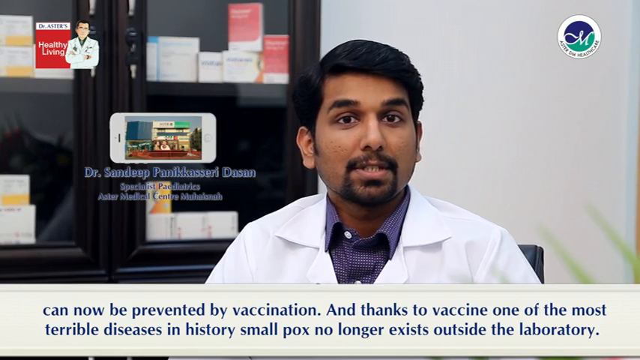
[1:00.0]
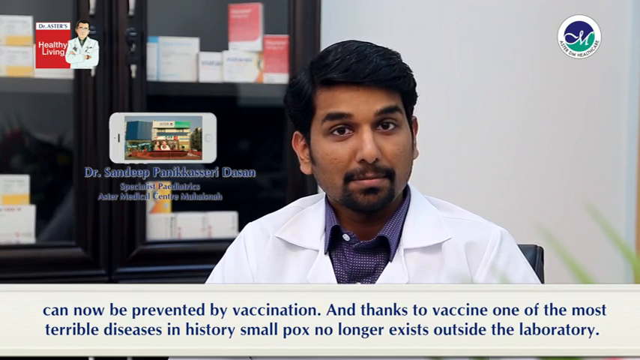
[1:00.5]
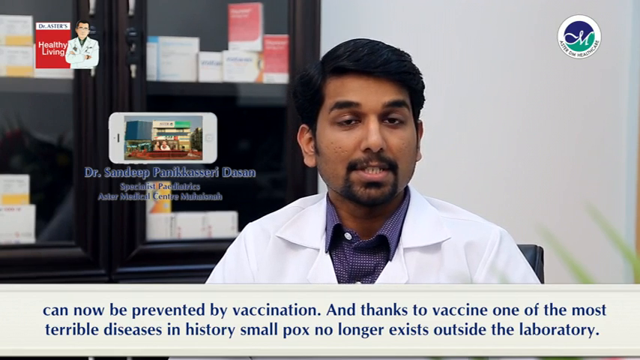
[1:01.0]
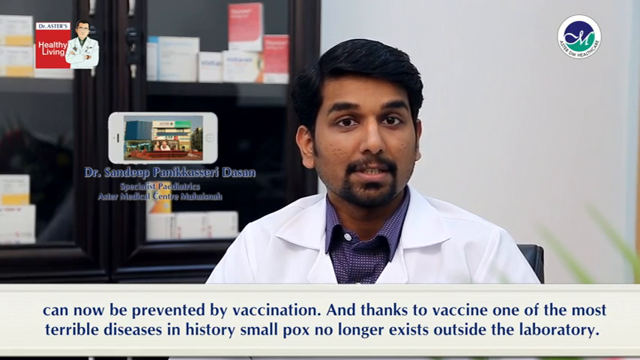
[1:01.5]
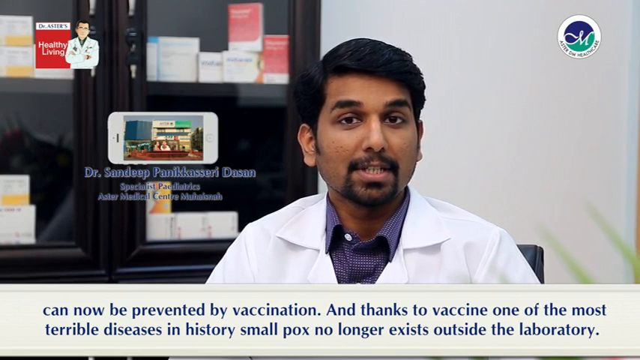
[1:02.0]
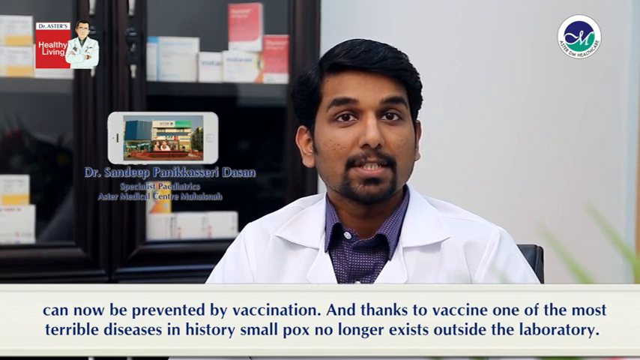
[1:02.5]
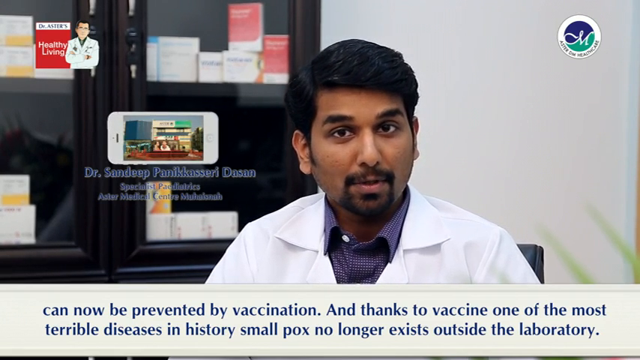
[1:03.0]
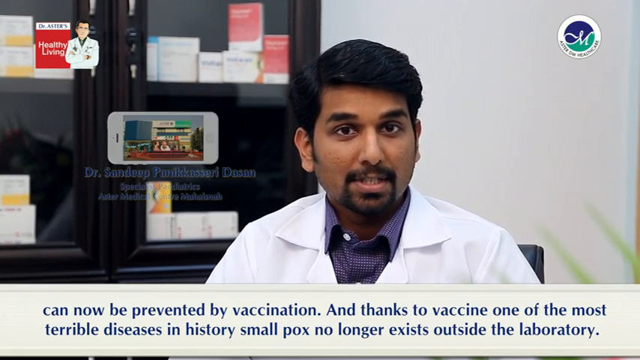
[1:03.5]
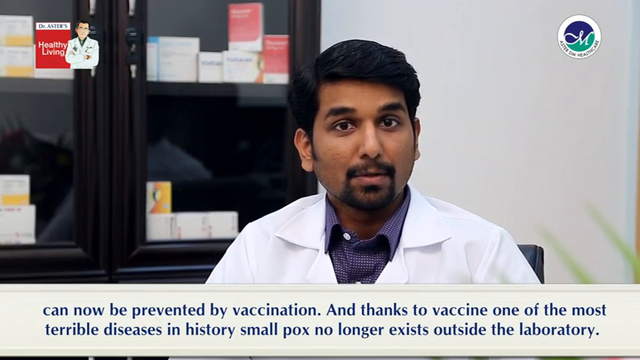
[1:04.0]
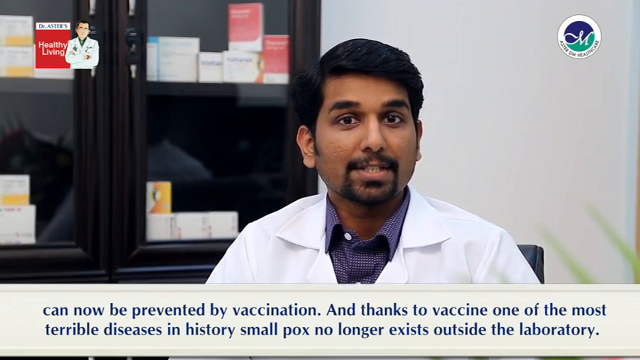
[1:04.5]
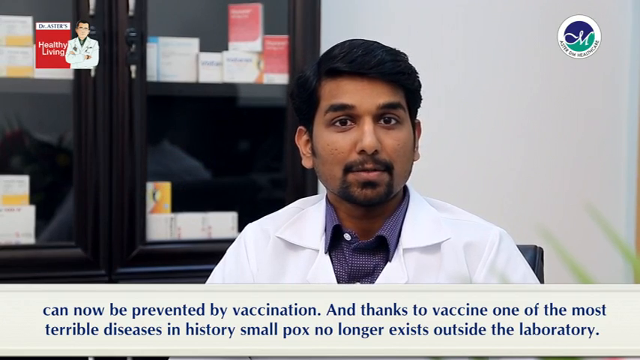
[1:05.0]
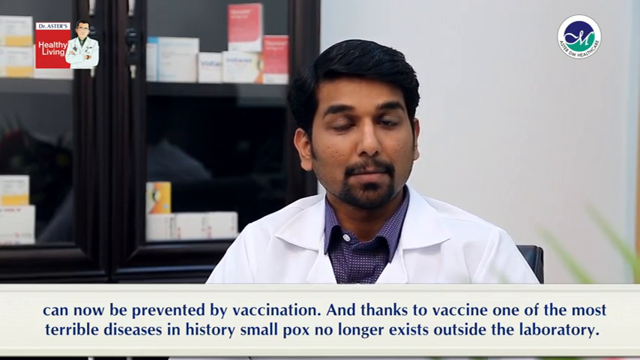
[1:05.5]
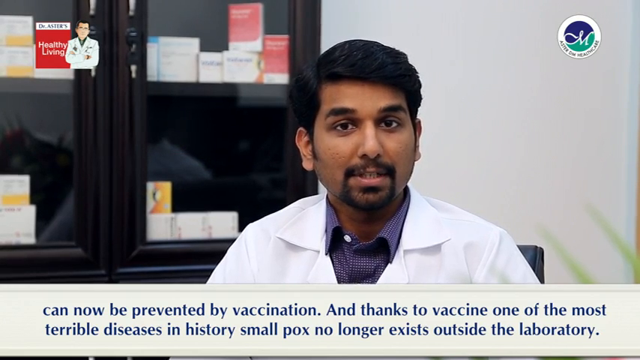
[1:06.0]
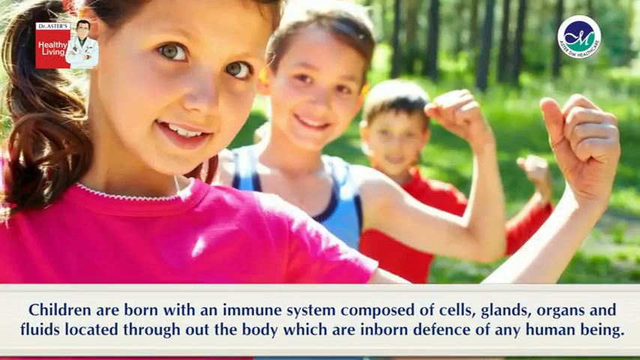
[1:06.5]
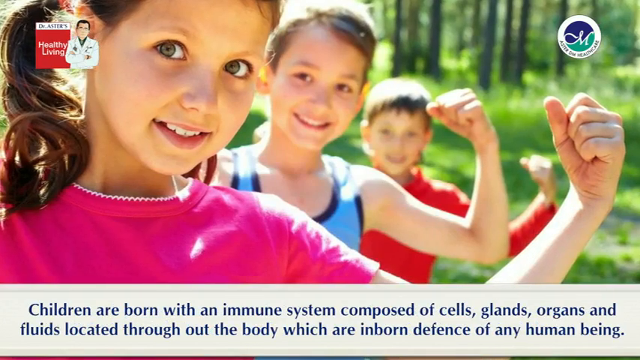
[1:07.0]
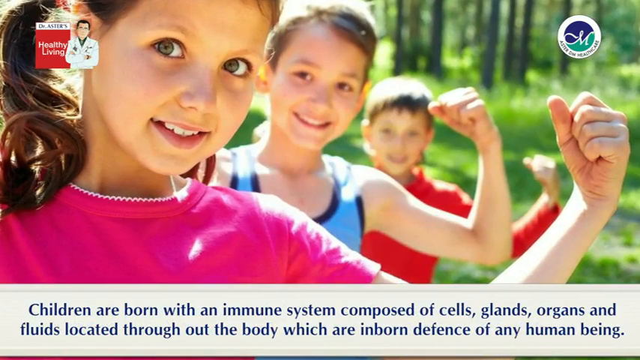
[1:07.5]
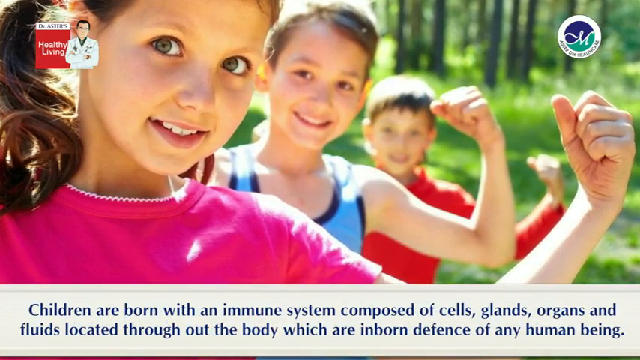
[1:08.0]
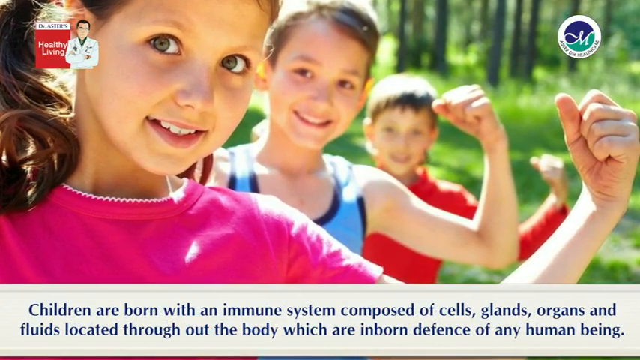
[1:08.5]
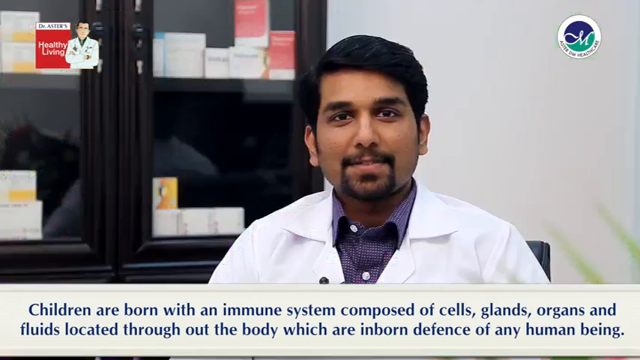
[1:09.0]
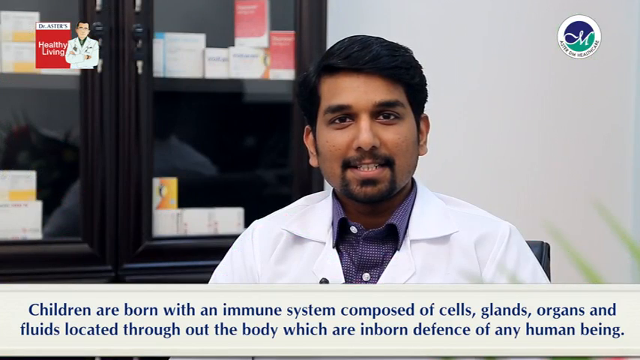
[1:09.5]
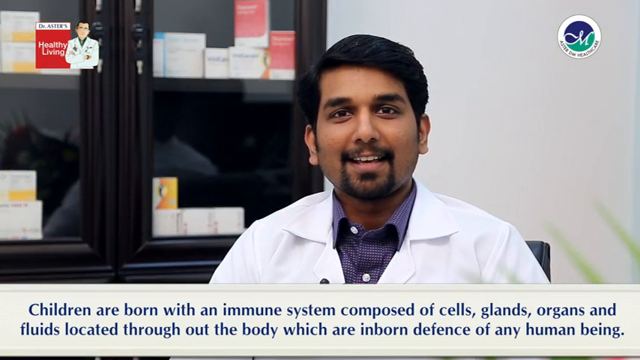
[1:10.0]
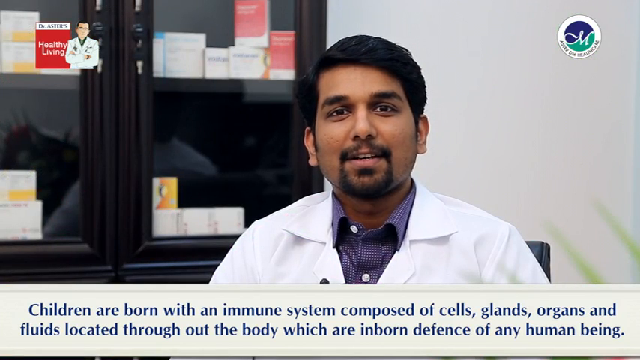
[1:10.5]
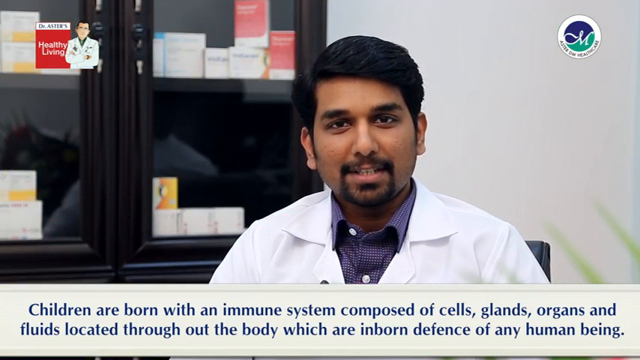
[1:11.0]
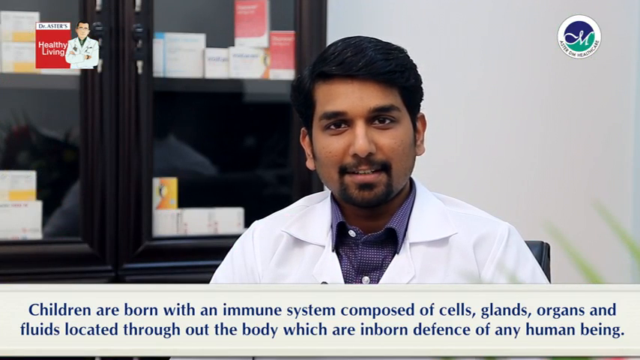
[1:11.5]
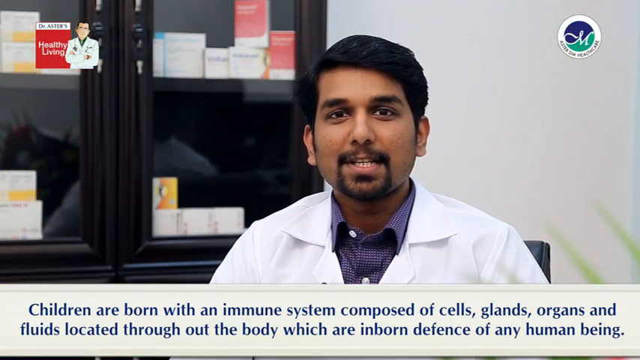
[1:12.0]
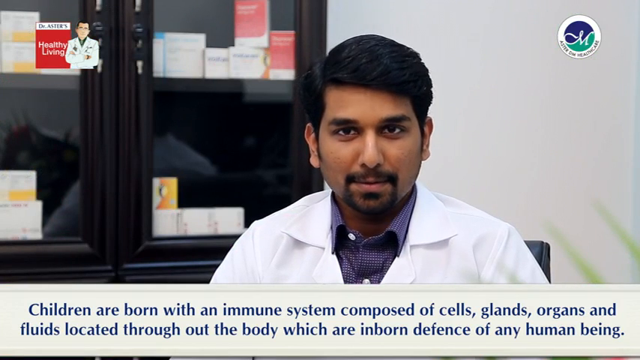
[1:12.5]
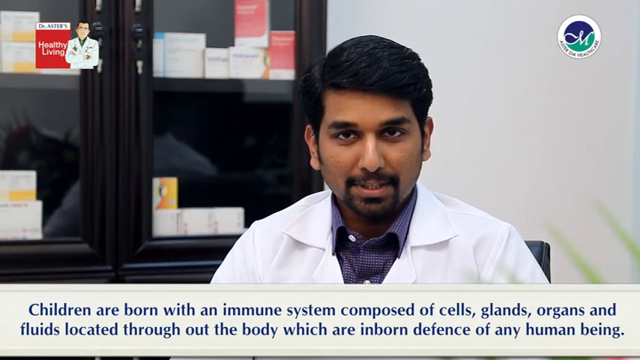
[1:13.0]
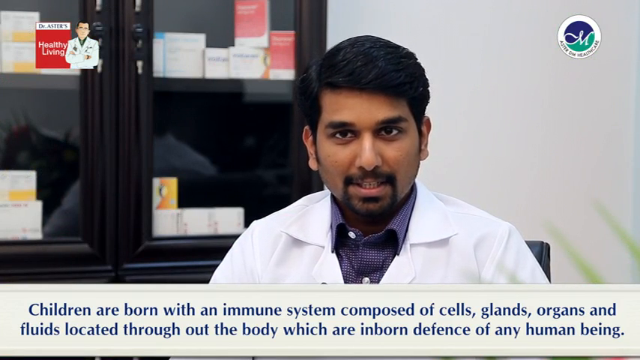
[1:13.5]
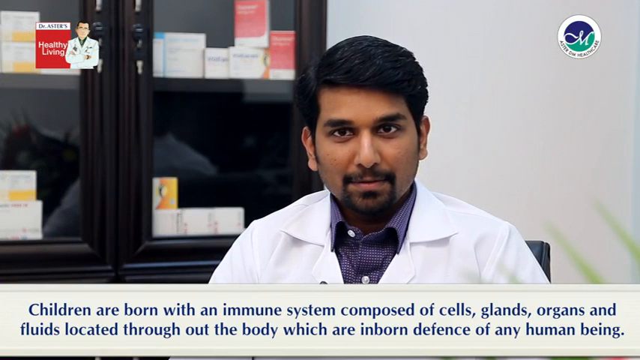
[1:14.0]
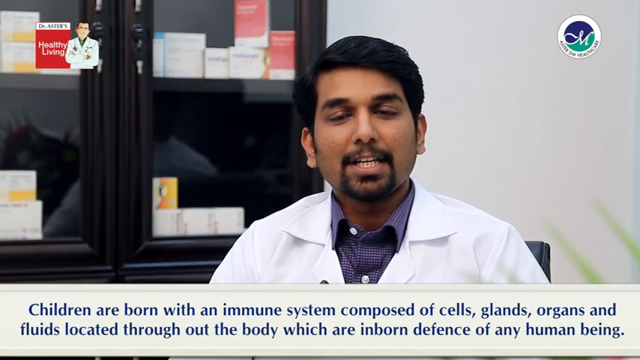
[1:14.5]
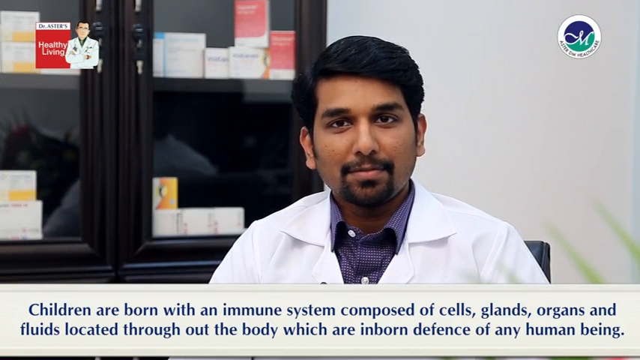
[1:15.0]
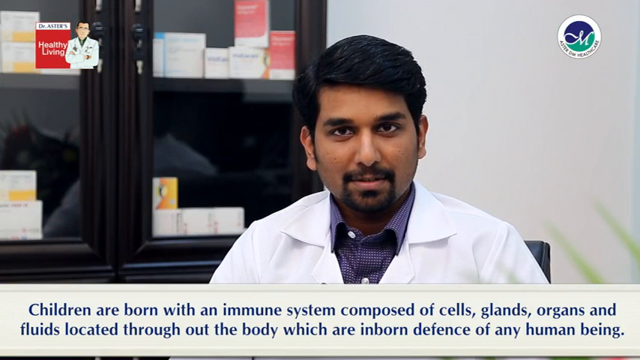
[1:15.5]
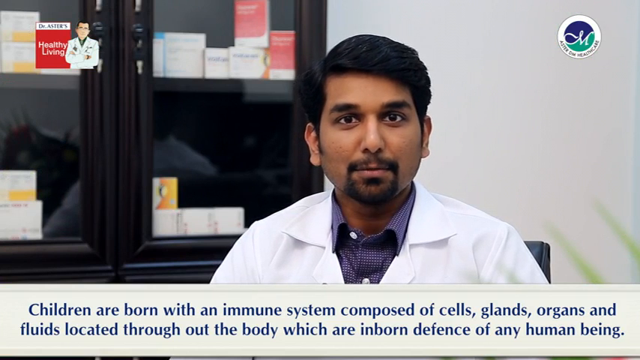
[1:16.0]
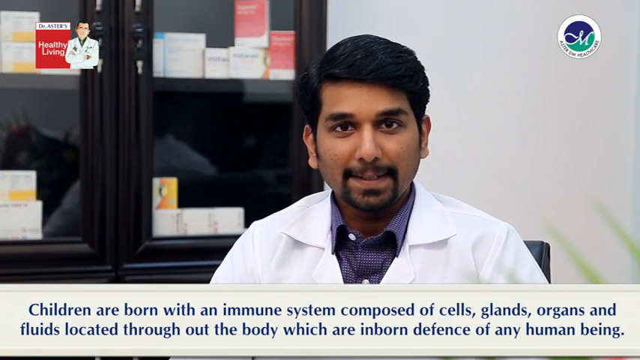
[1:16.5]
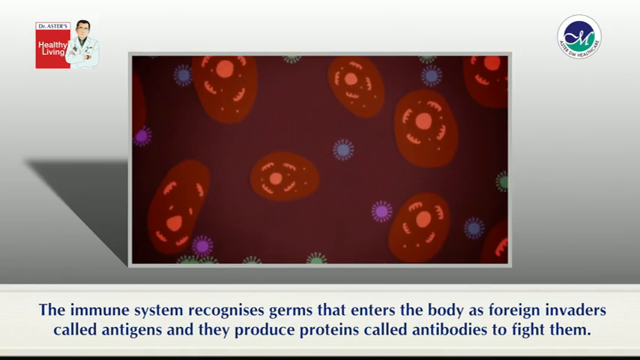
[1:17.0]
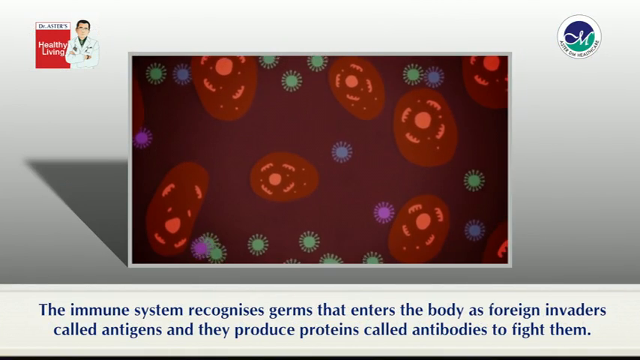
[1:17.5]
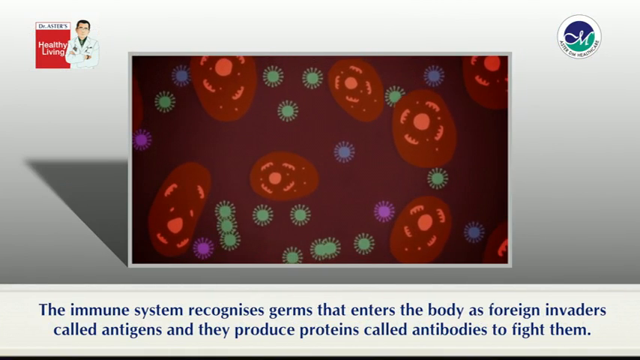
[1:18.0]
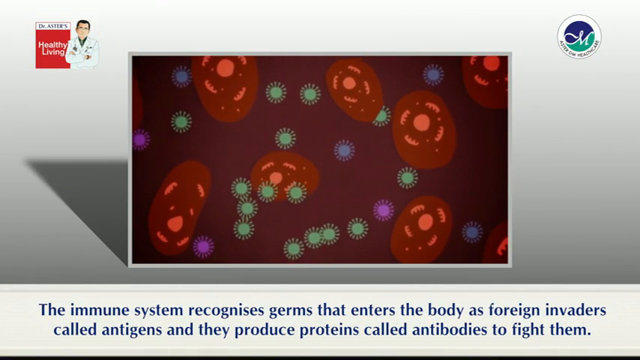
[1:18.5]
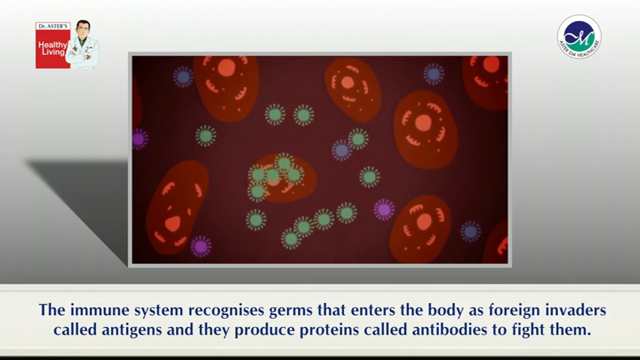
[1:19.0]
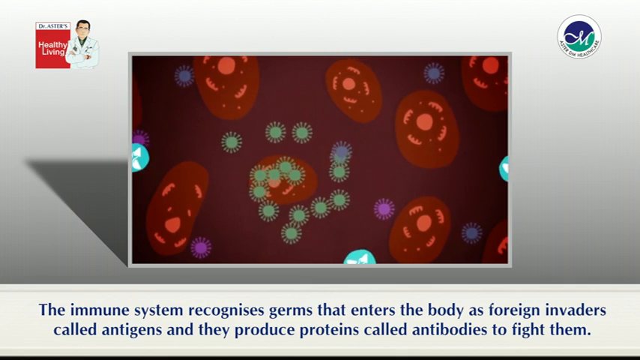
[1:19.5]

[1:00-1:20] An Indian man with black hair and a black goatee sits speaking to the camera, wearing a purple button-up shirt with the top button unbuttoned and a white doctor's coat over it. Behind him, over his right shoulder, is a black bookcase with a few shelves holding boxes of different products; over his left shoulder only a white wall is visible. Text along the bottom of the screen reads "can now be prevented by vaccination and thanks to vaccine one of the most terrible diseases in history, smallpox no longer exists outside the laboratory." A picture then shows three kids in a row: a girl in a pink shirt, behind her a girl in a blue tank top, and behind her a boy in a long-sleeved red shirt. They are standing outside with green grass and trees behind them. Text along the bottom reads "children are born with an immune system composed of cells, glands, organs, and fluids located throughout the body, which are inborn defense of any human being."